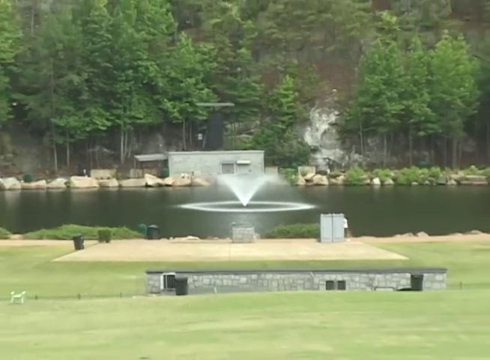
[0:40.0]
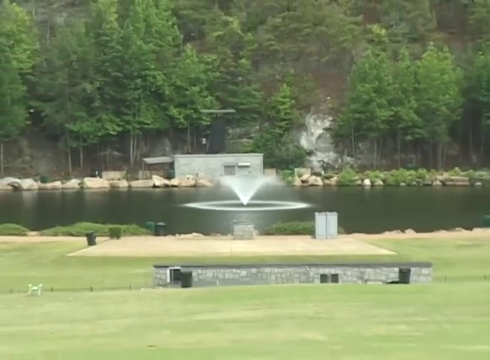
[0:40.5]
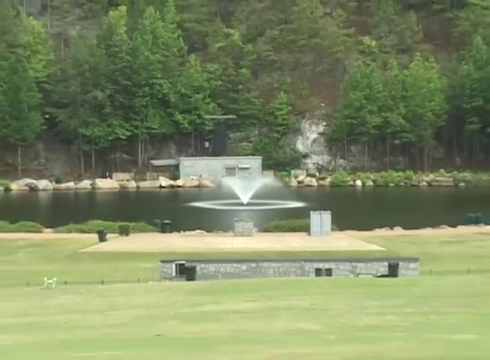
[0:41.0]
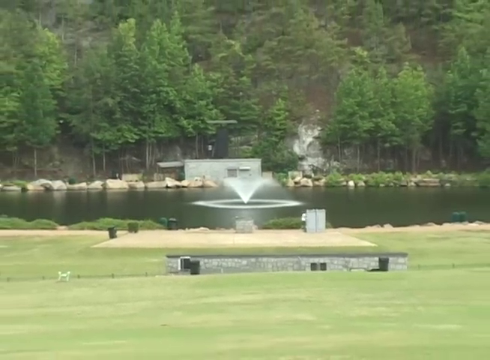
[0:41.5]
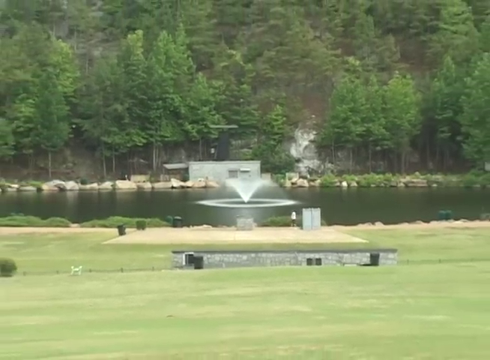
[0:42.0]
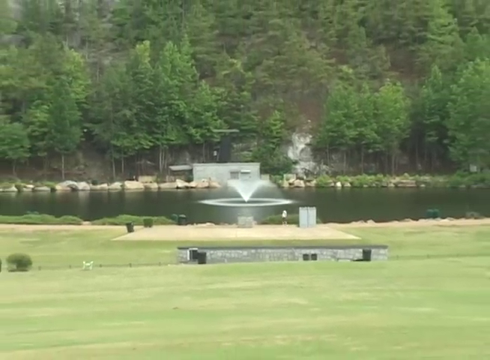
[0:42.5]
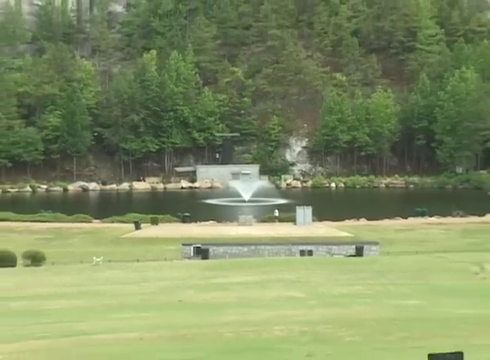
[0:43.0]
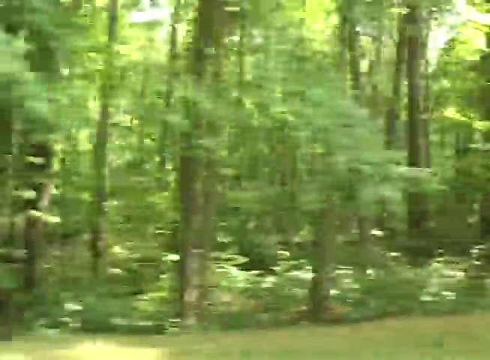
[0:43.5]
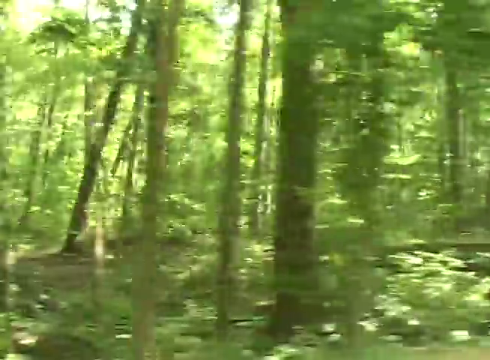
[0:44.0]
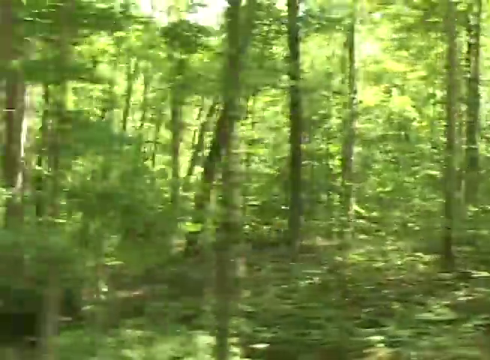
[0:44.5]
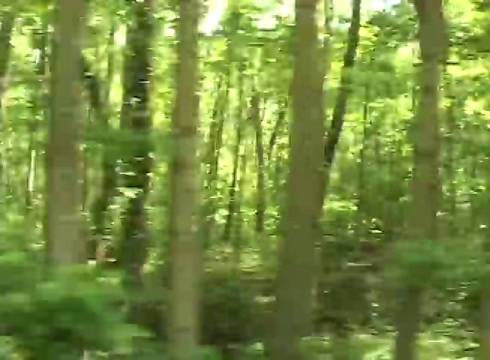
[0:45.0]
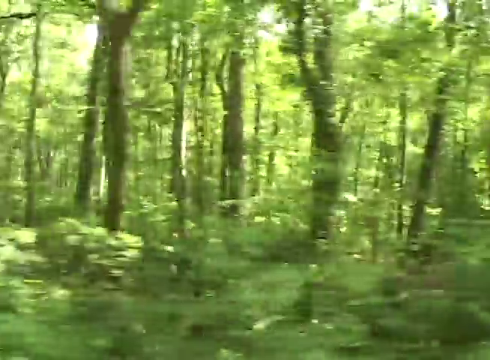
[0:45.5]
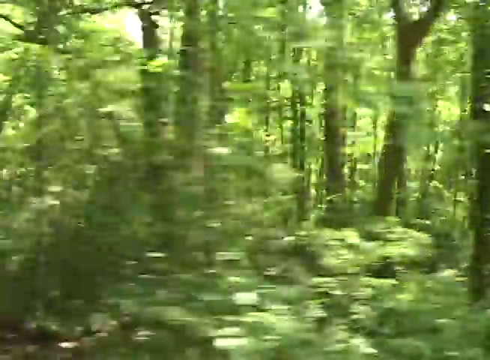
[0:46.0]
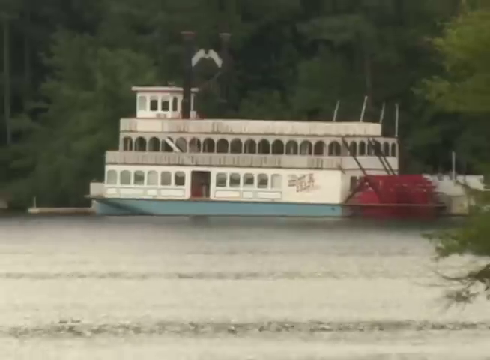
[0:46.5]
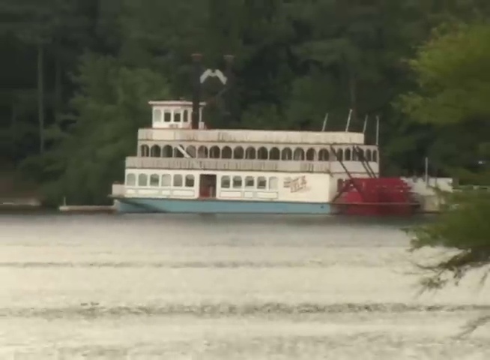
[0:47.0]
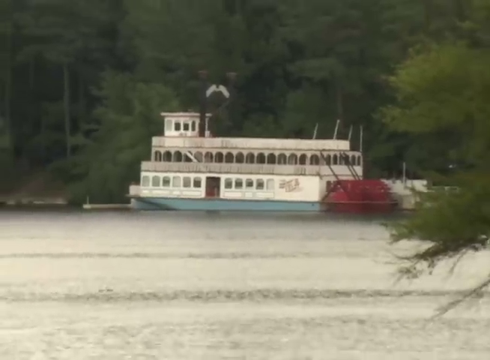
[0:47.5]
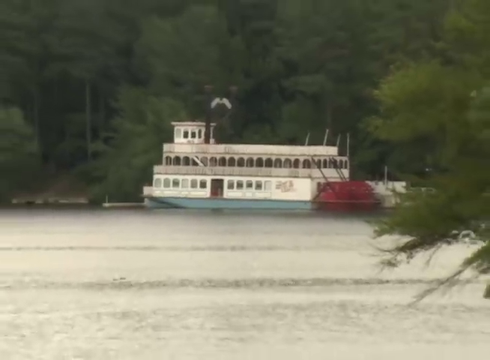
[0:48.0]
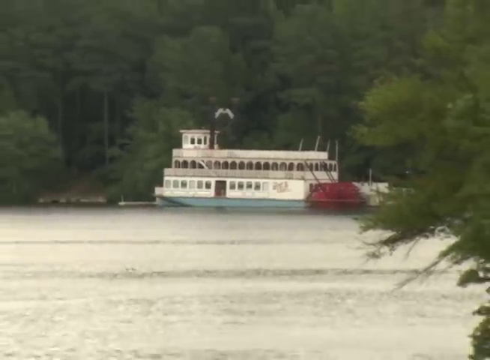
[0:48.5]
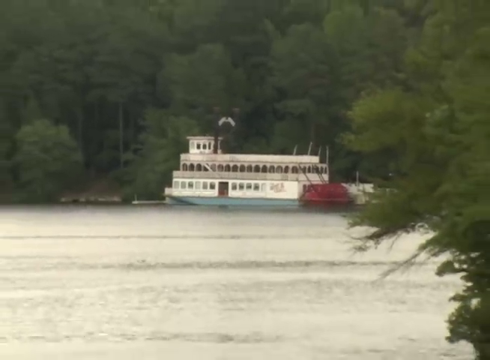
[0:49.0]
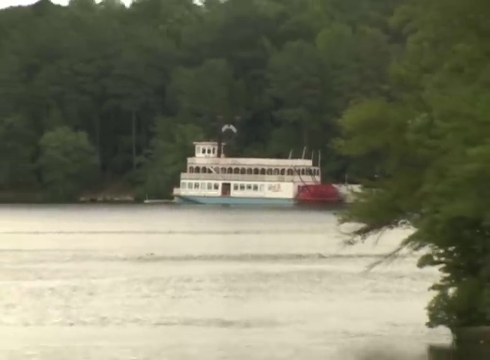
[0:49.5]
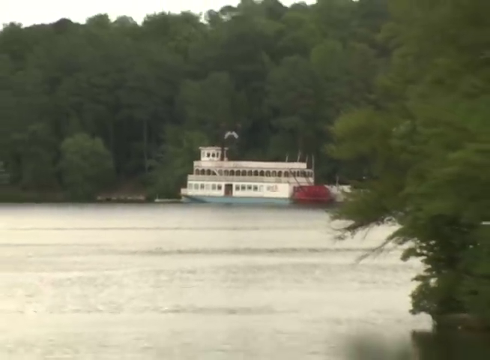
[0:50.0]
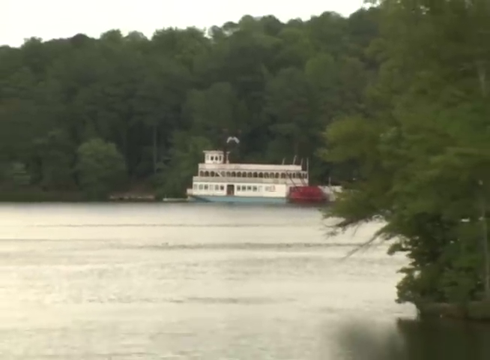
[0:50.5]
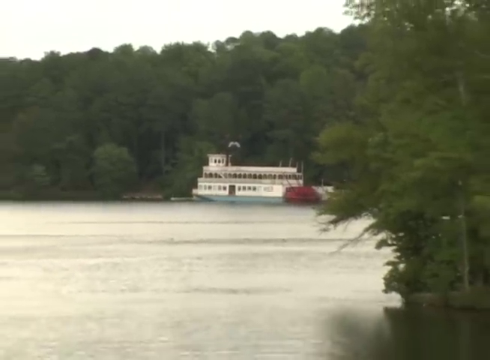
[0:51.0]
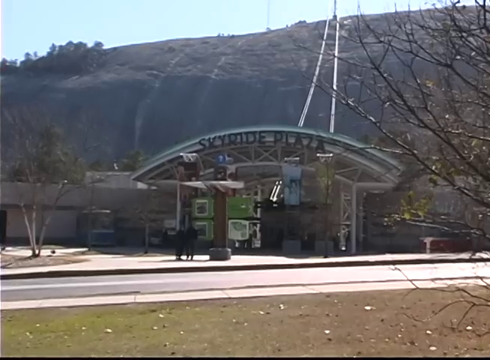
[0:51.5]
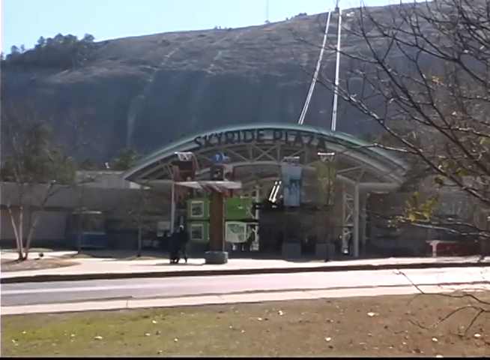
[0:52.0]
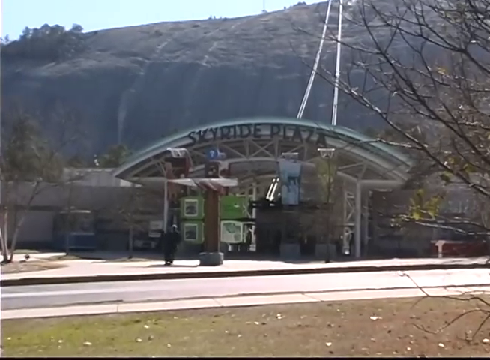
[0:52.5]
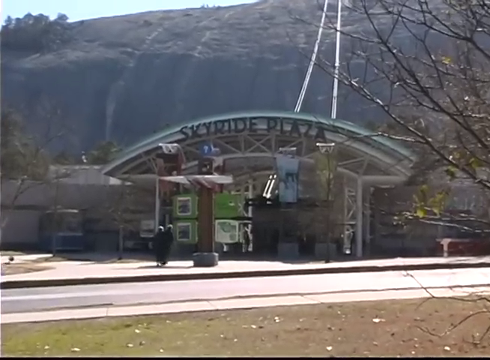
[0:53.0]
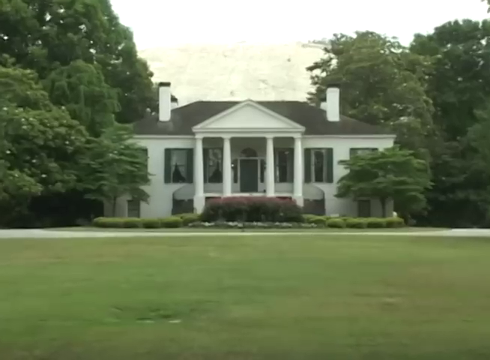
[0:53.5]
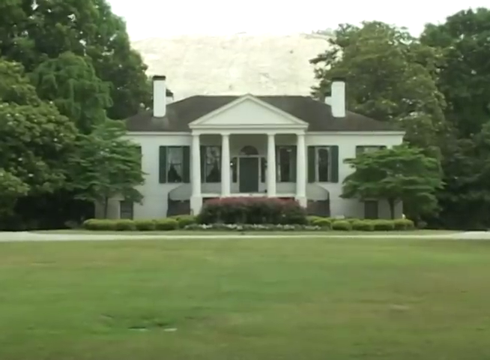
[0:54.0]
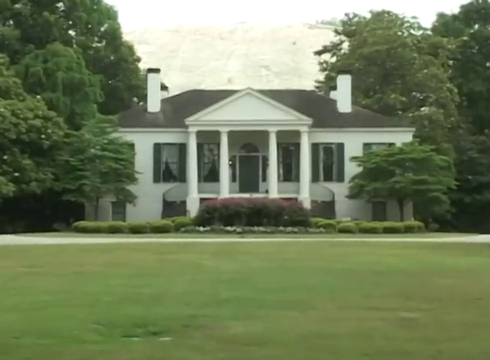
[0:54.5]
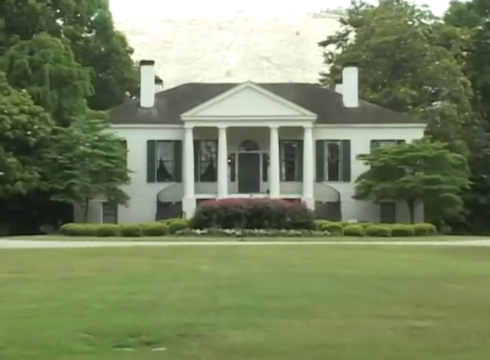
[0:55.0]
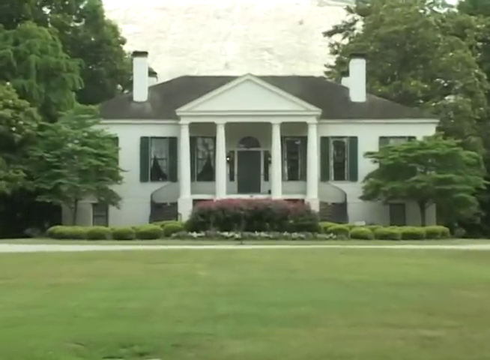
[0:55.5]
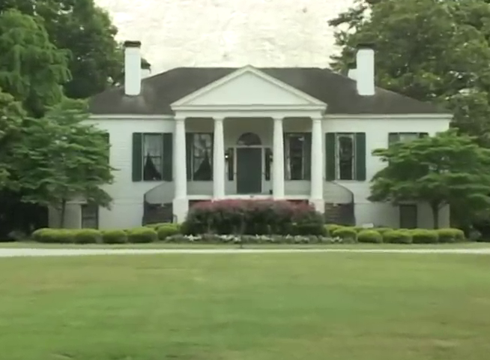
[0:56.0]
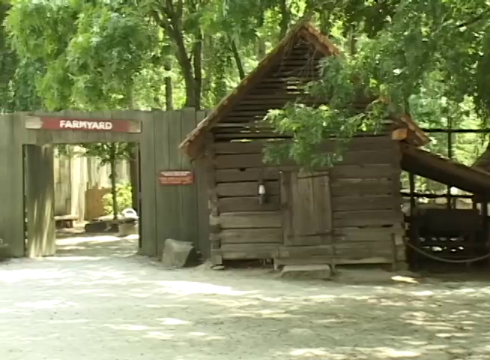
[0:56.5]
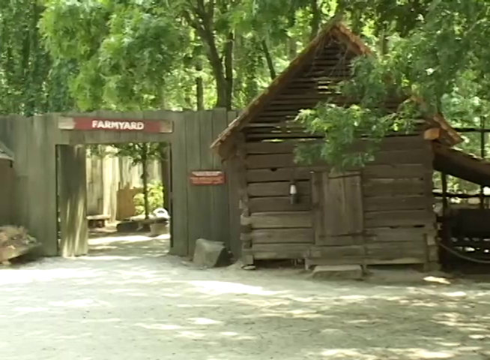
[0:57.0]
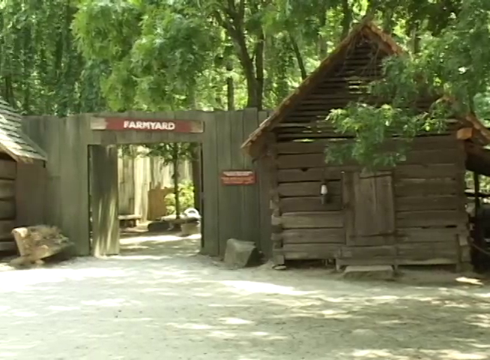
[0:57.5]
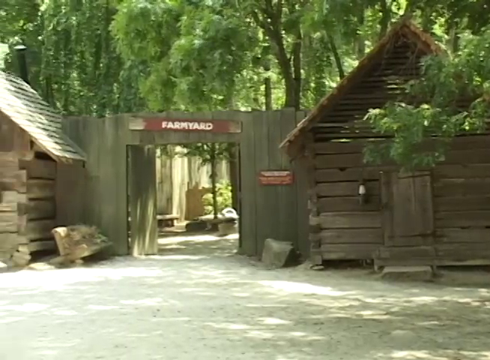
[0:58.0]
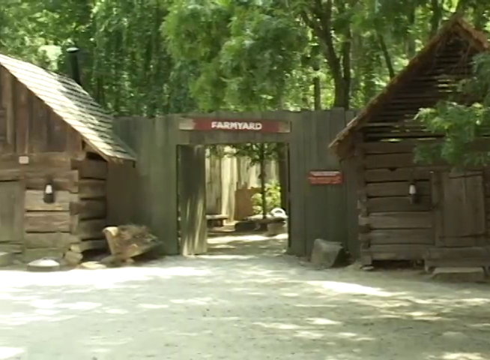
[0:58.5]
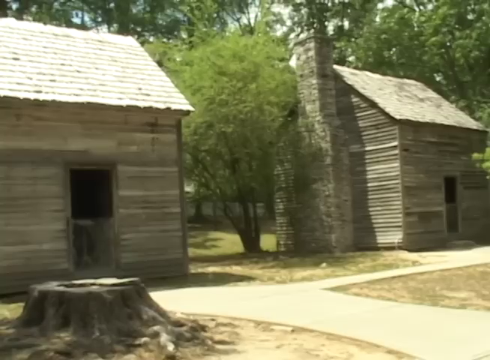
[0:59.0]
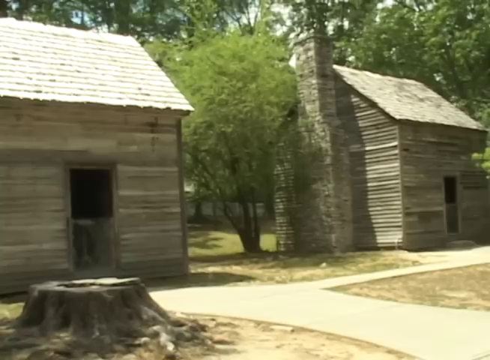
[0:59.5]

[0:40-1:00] Trees, stone rocks, a pond with water splashing, the little building, a rock wall and light green grass are visible. The camera pans out as somebody walks. The scene moves to a wooded area with many skinny trees covered in green leaves; the camera moves quickly, as if someone is riding a bike, walking or driving a car. An old-fashioned 1800s-type boat with red paddles in the back is on the pond or river, with trees in the background; it is part of a steamboat. The camera pans away. Next is a part of the mountain where the side reads "Sky Ride Plaza," with a few people there and a house. Between a bunch of trees on the left and on the right, something kind of like a rocky mountain is in the back. The house has four pillars, five or six windows and two chimneys, with some bushes and a very manicured lawn. In another area there is an old-style barn building or shed, a sign reading "farmyard," and a bunch of other barns.